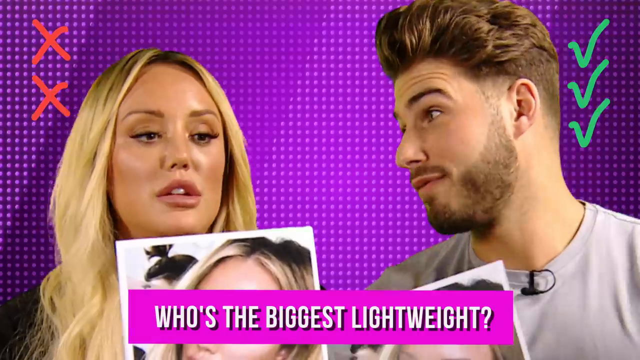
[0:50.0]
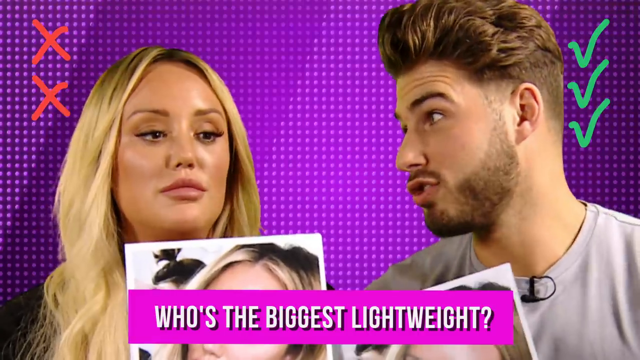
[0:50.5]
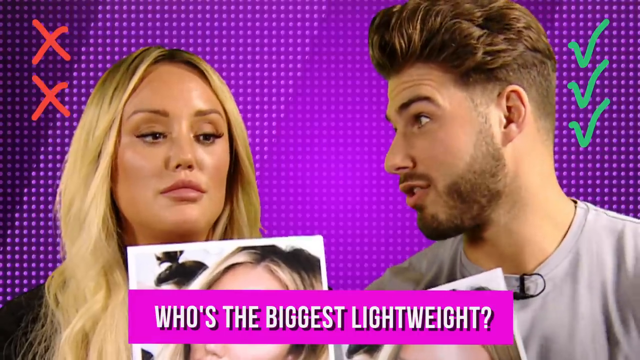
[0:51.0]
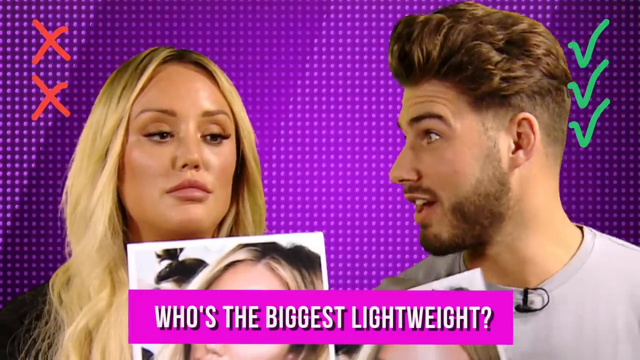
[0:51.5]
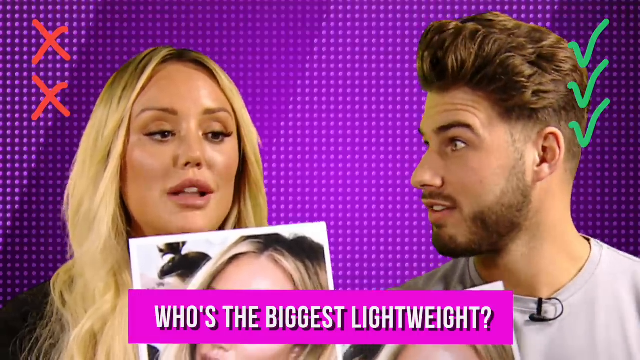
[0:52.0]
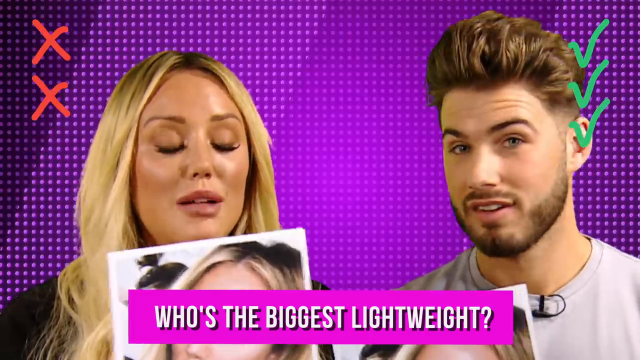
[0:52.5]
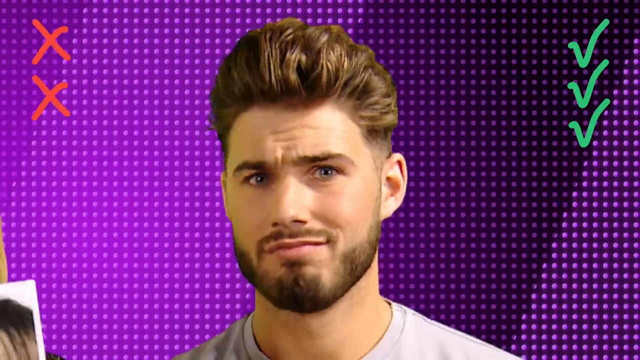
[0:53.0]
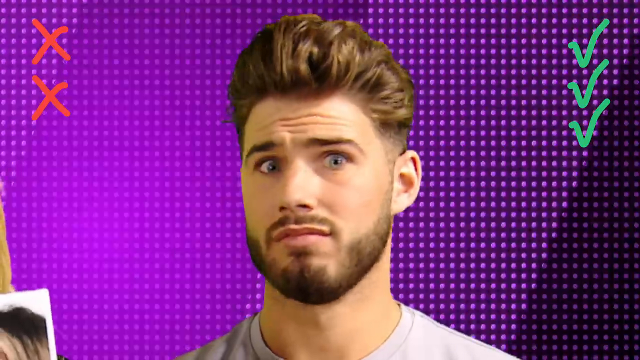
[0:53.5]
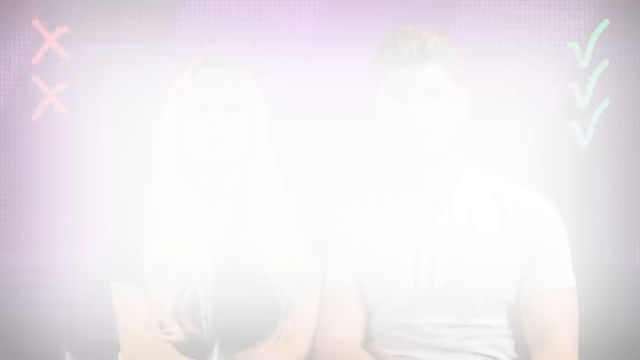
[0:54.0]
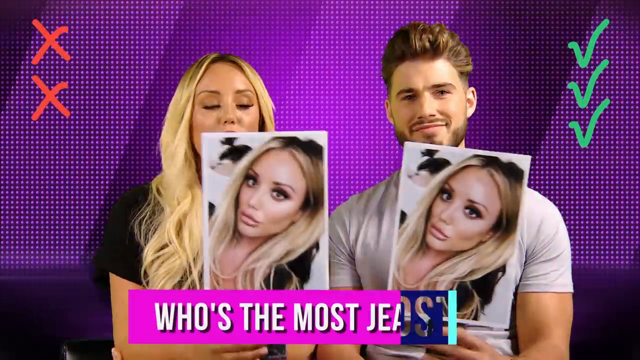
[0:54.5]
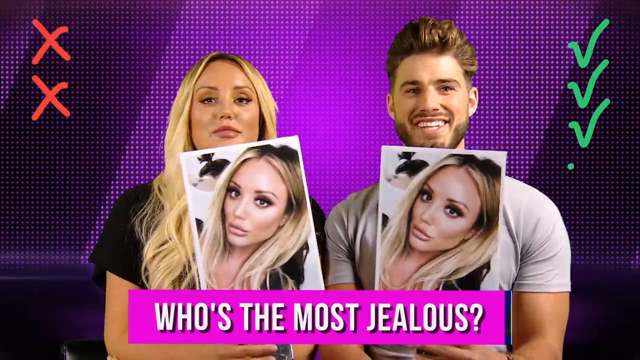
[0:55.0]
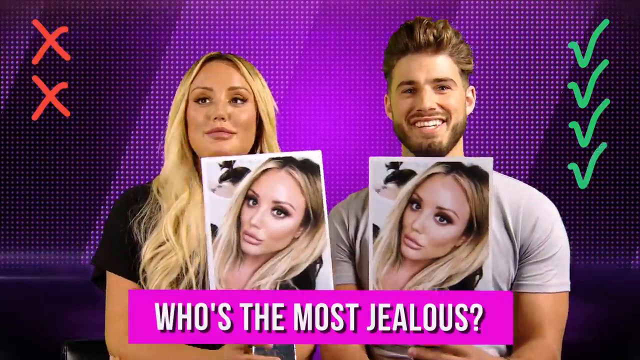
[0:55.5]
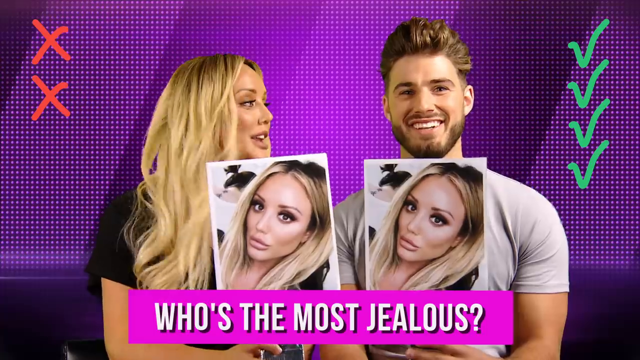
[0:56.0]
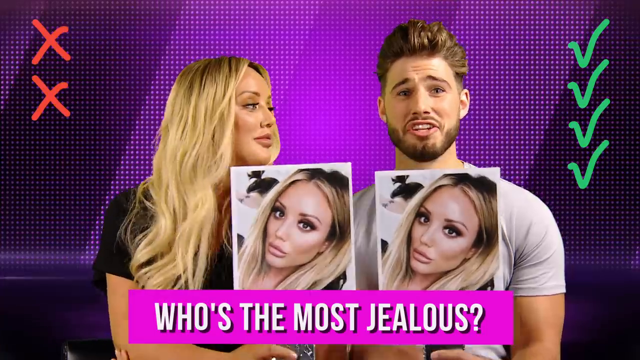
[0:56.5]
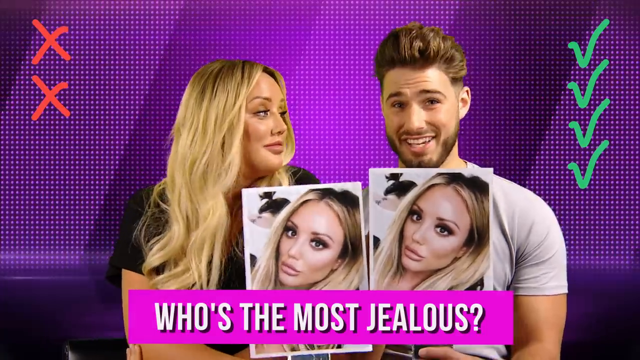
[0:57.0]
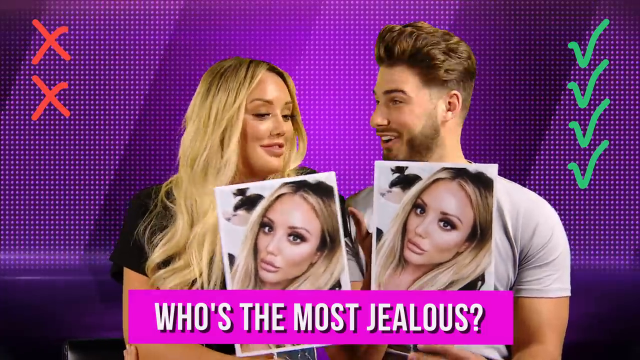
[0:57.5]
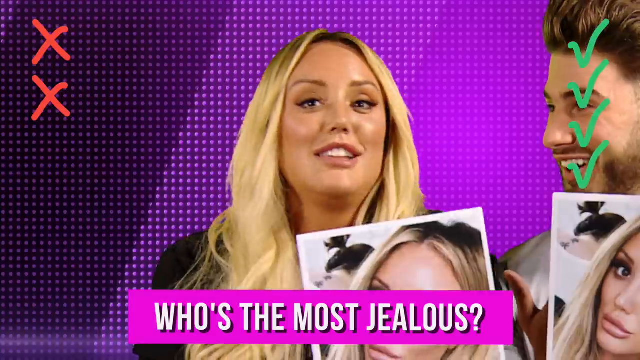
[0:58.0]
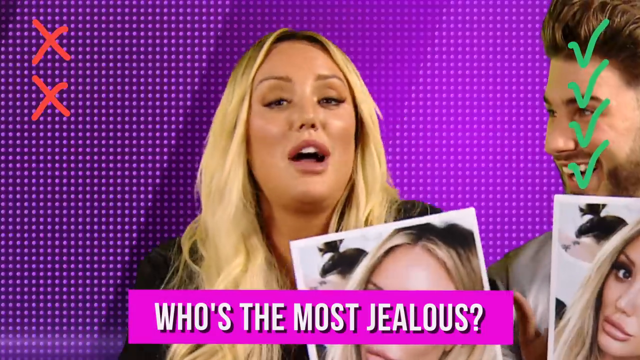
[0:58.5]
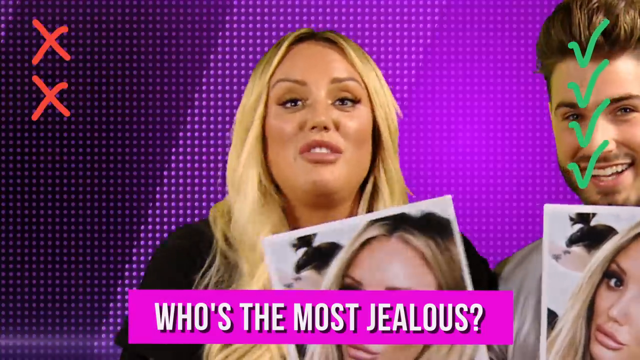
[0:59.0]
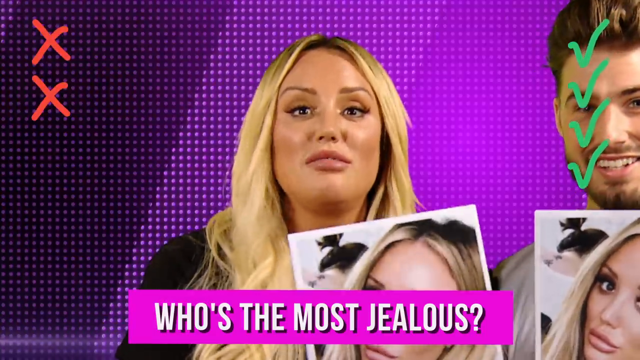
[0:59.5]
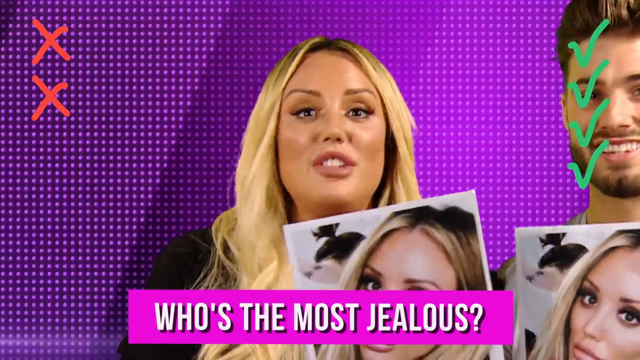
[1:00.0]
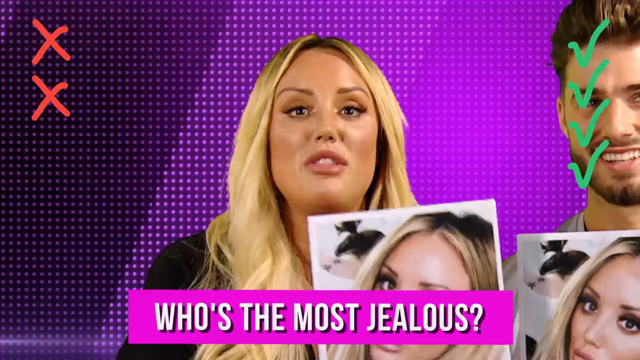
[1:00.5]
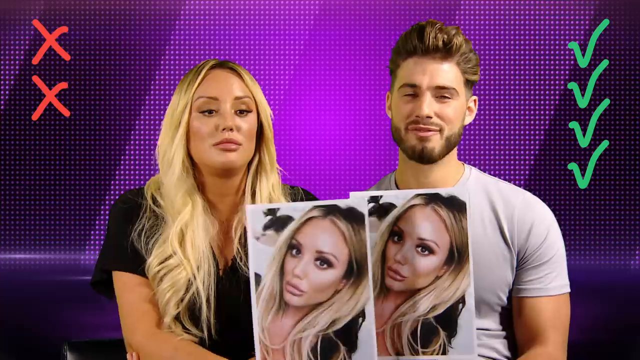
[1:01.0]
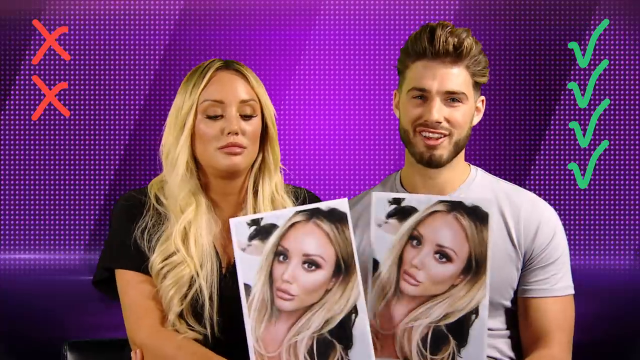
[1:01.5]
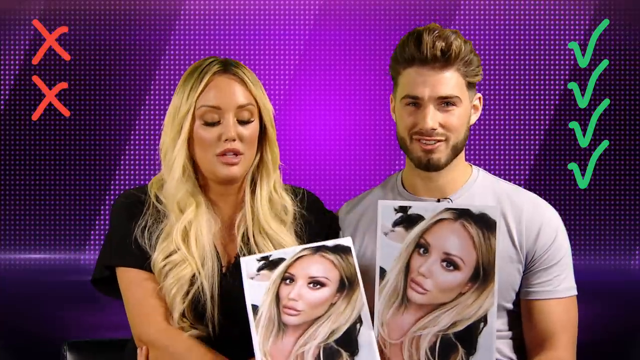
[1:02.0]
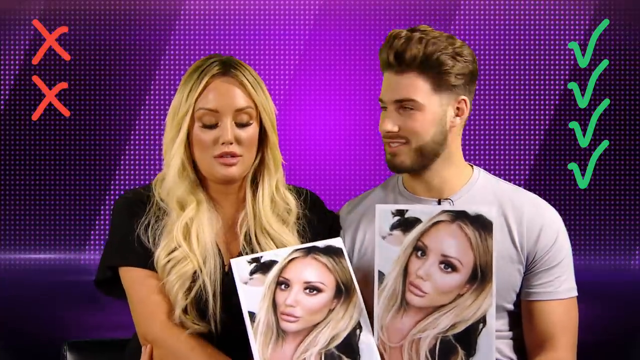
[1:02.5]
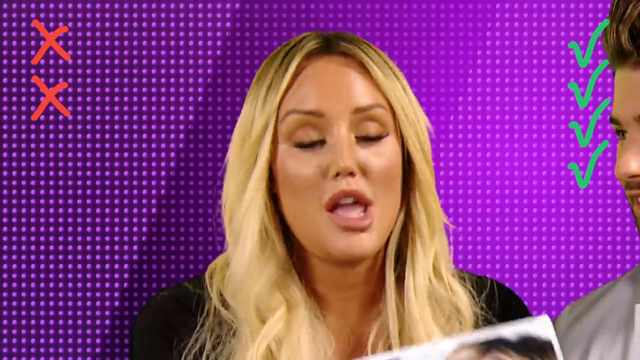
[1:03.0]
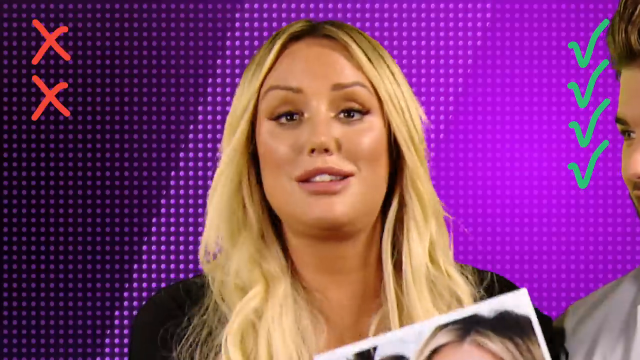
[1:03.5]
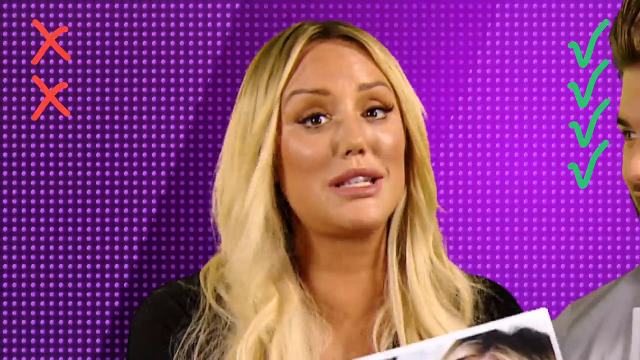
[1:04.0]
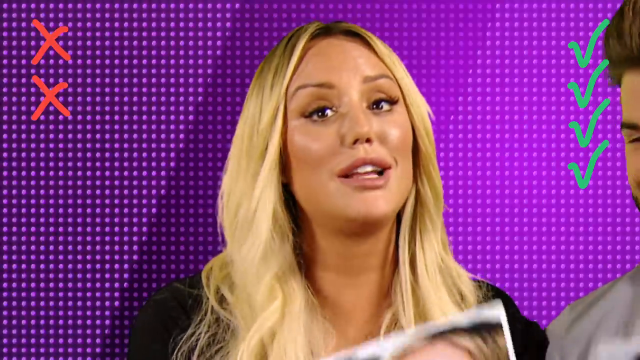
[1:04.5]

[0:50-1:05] The question "who is the biggest lightweight?" is on screen, and they appear to be discussing it. Next comes "who's the most jealous?" and they both vote for her, discussing individually and then together why she is the most jealous; she looks completely in agreement that she is the most jealous. The video cuts rapidly from question to question. The background is flashing diagonal purple lines made of dots or pixels. By the end they are up to two wrongs and four rights.